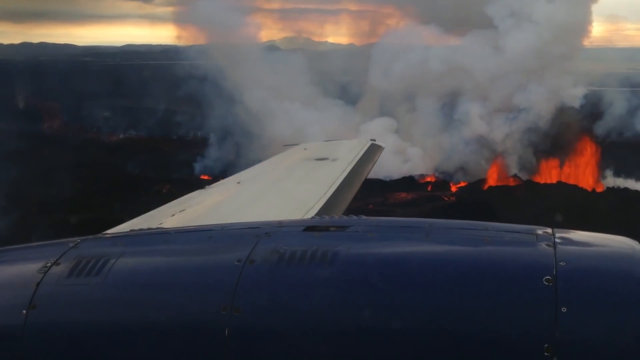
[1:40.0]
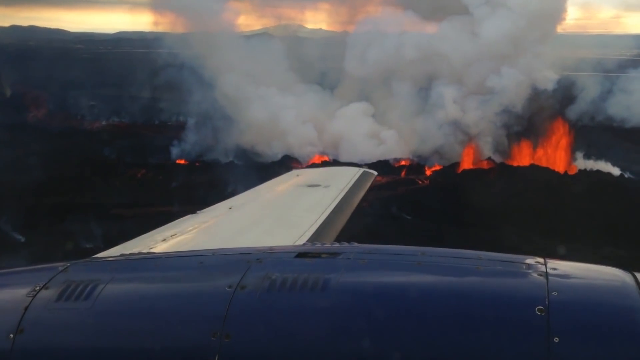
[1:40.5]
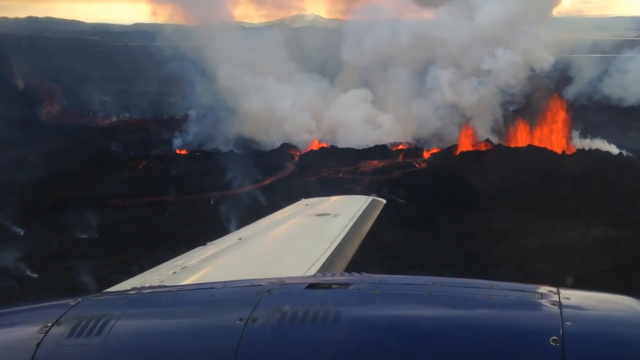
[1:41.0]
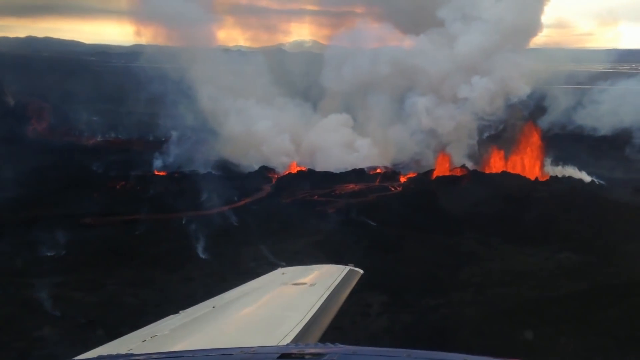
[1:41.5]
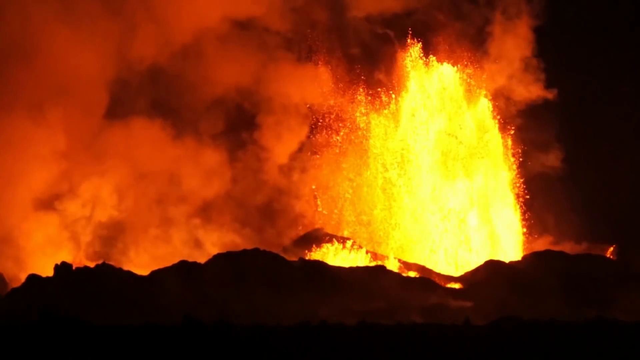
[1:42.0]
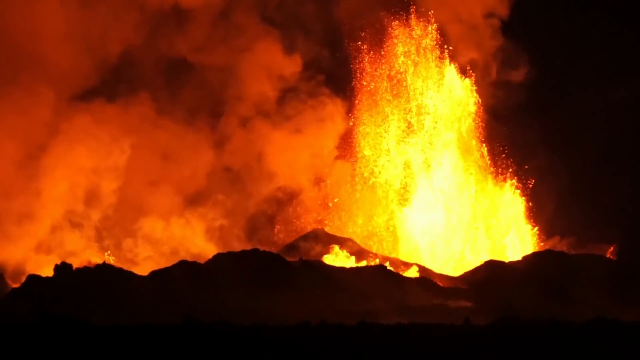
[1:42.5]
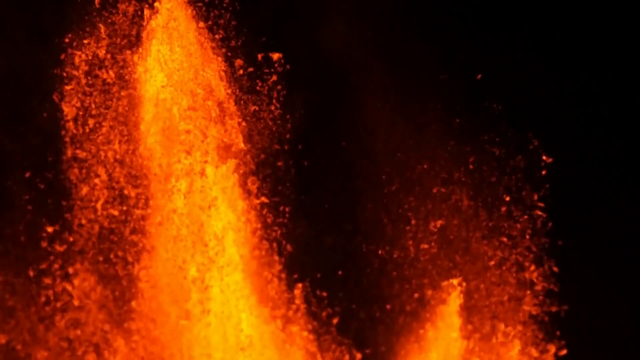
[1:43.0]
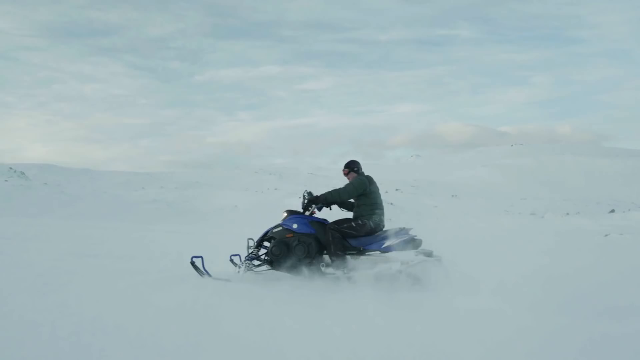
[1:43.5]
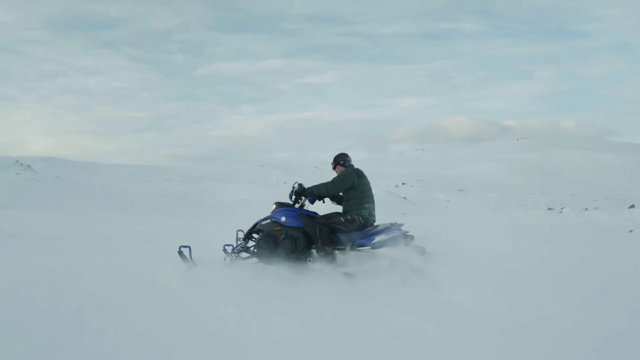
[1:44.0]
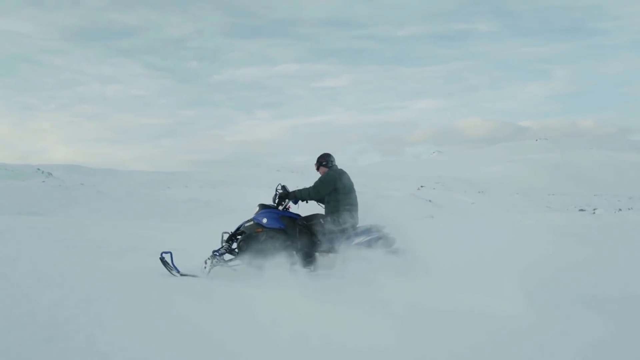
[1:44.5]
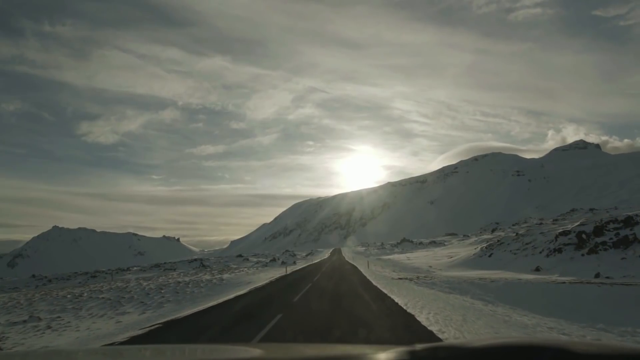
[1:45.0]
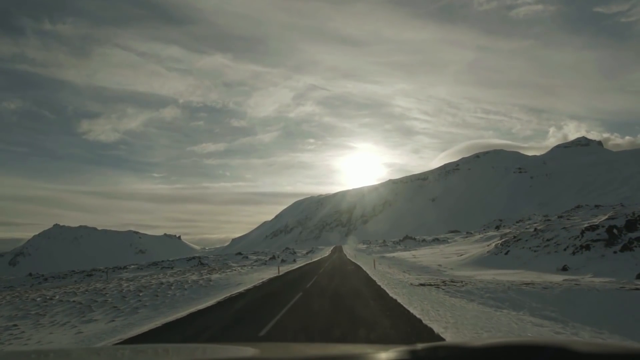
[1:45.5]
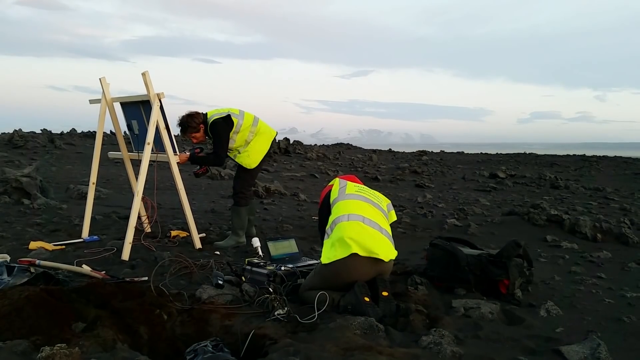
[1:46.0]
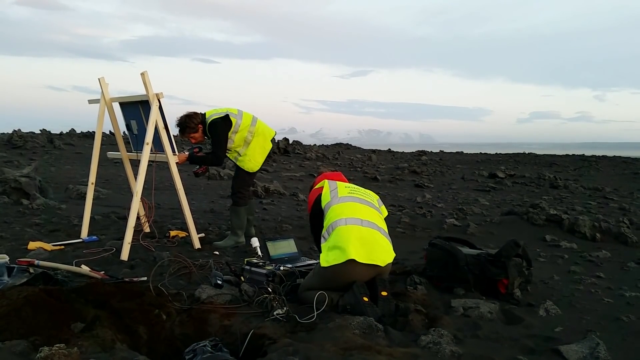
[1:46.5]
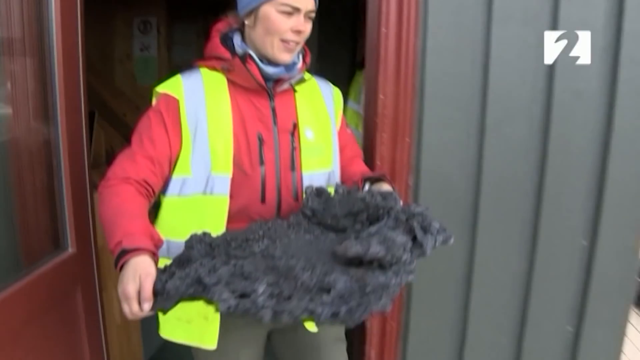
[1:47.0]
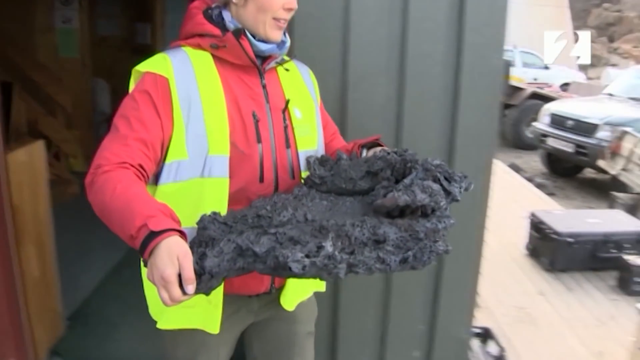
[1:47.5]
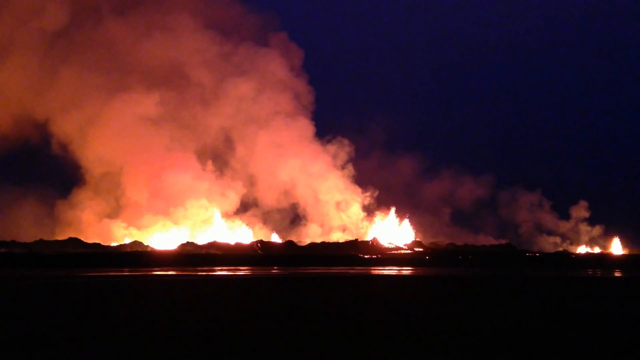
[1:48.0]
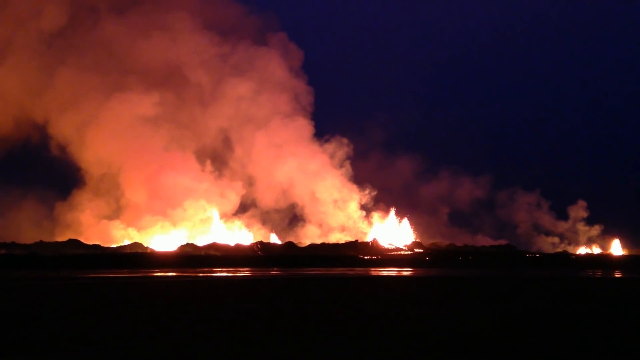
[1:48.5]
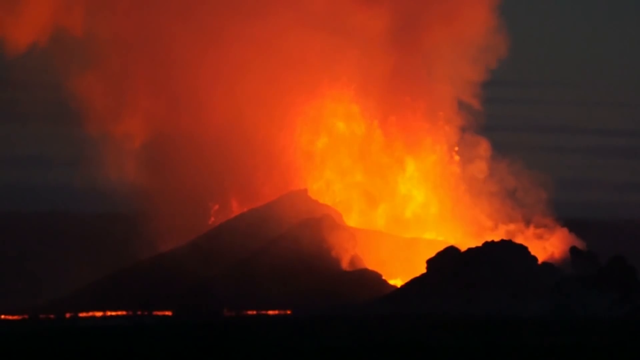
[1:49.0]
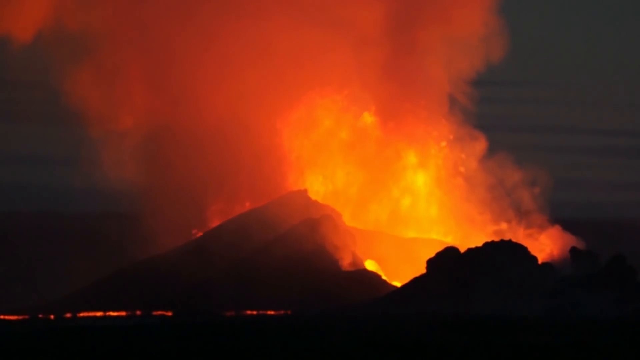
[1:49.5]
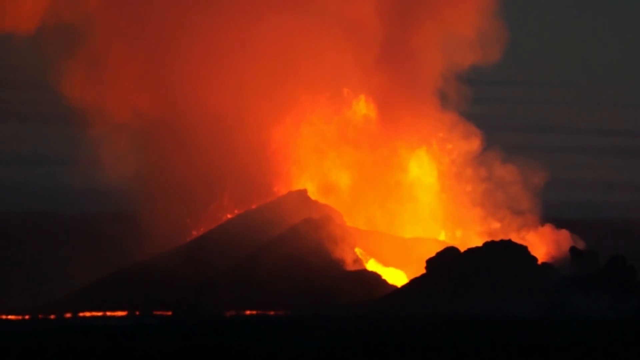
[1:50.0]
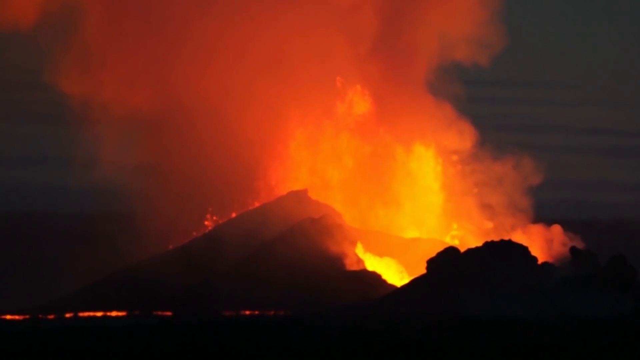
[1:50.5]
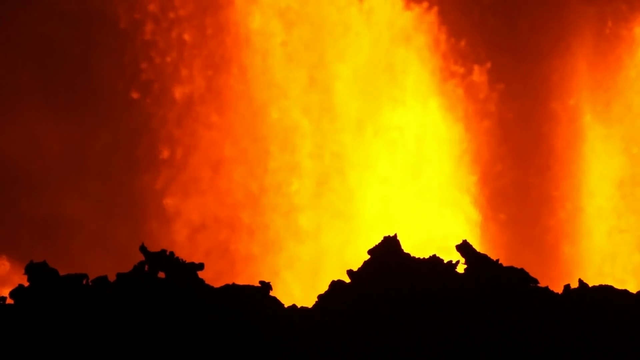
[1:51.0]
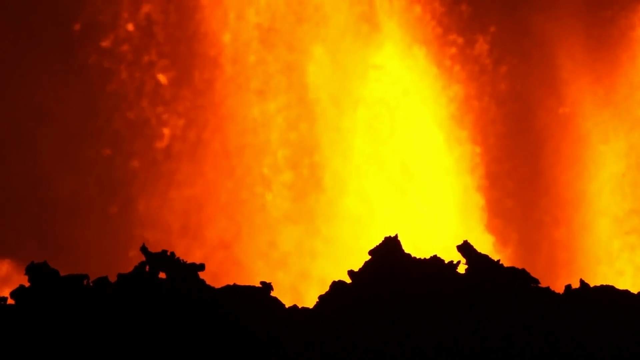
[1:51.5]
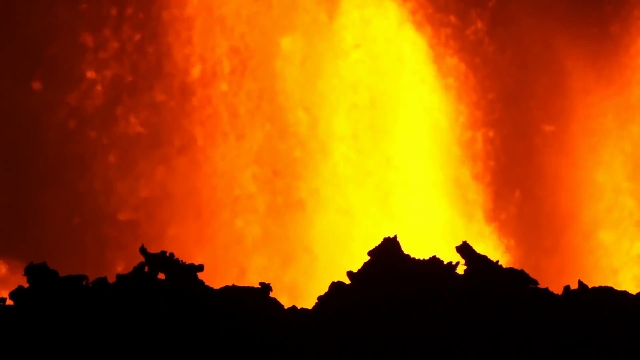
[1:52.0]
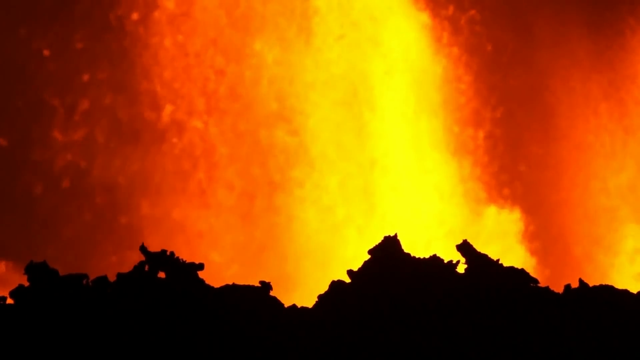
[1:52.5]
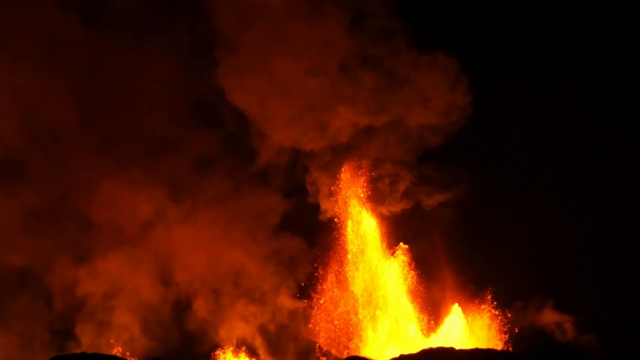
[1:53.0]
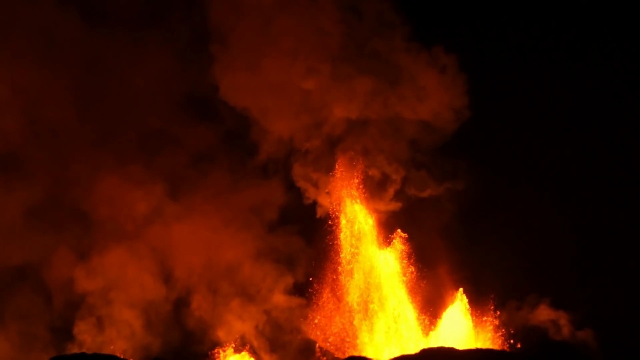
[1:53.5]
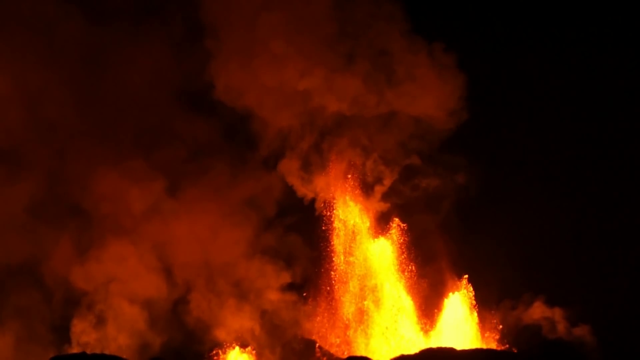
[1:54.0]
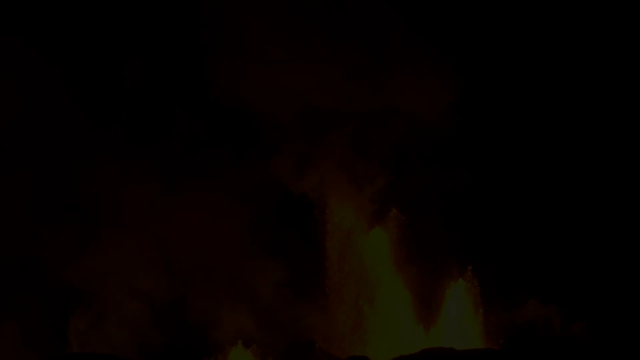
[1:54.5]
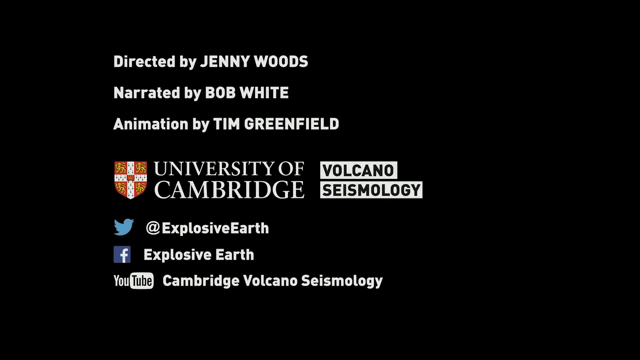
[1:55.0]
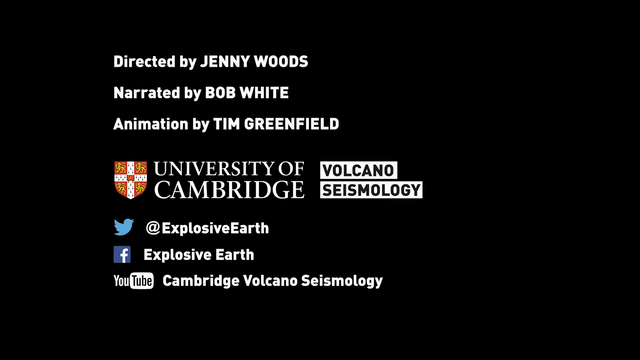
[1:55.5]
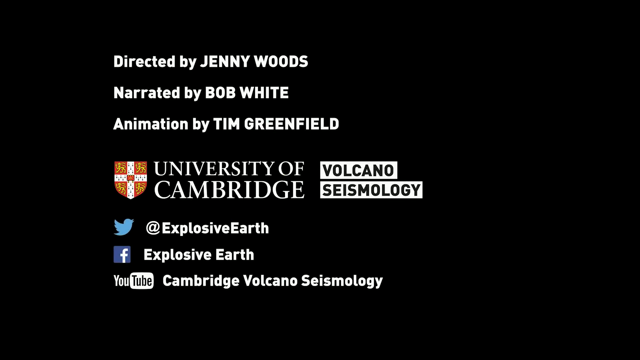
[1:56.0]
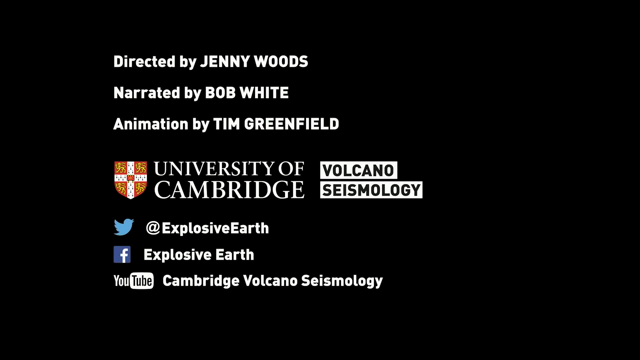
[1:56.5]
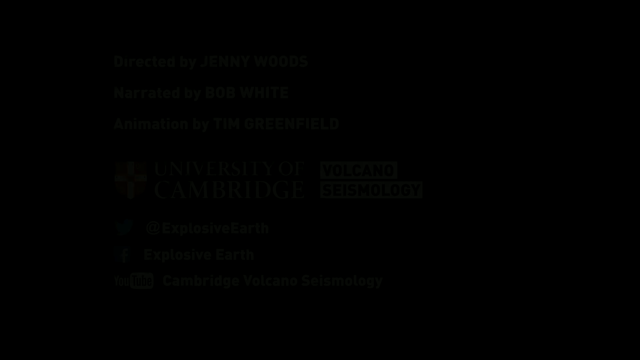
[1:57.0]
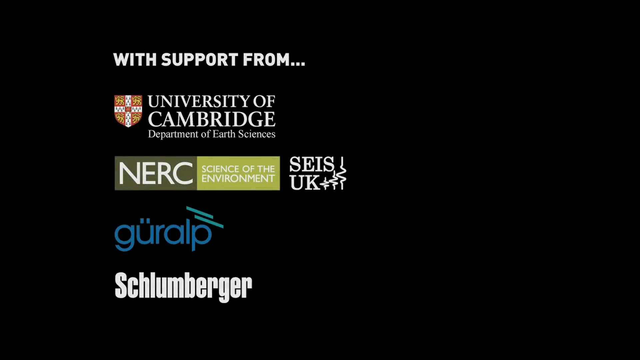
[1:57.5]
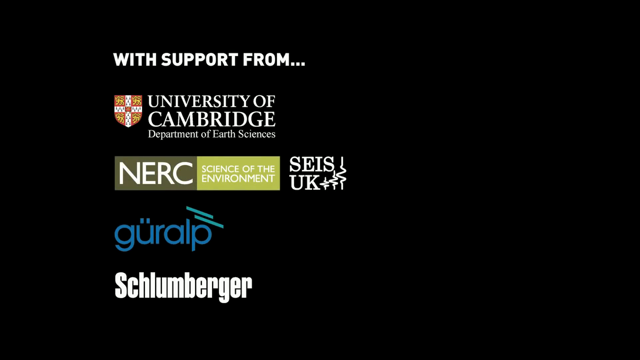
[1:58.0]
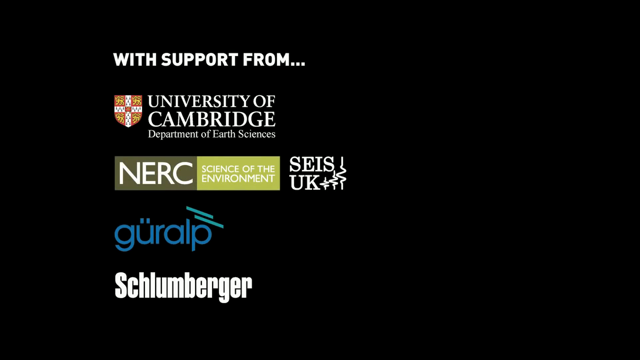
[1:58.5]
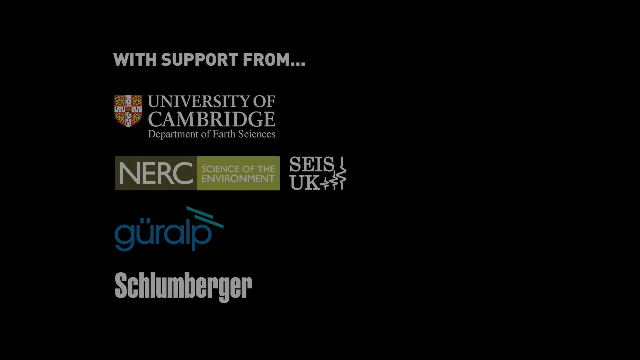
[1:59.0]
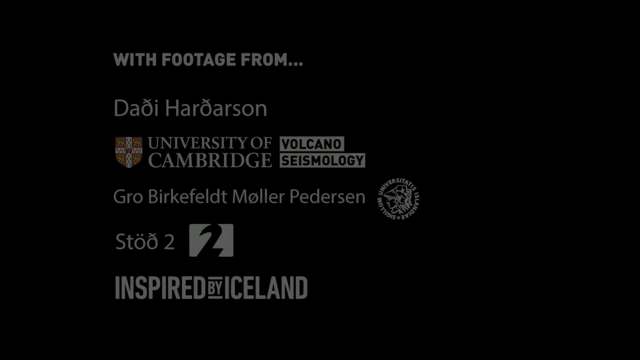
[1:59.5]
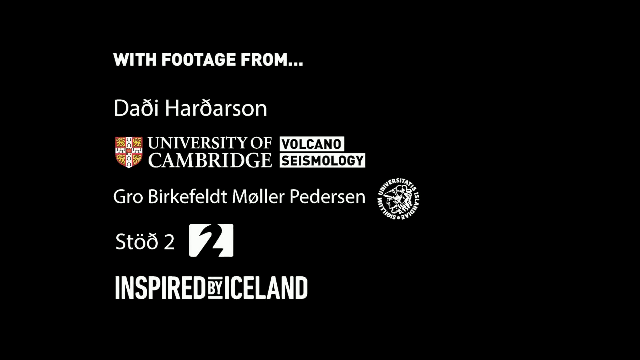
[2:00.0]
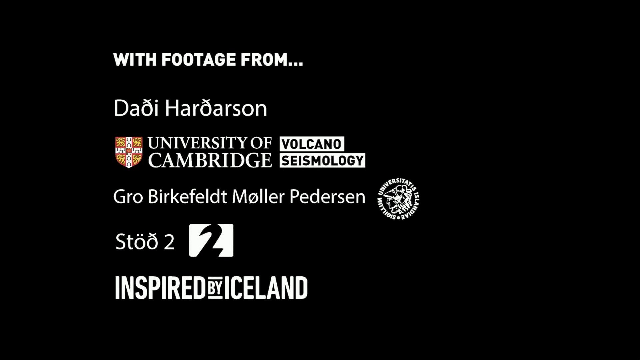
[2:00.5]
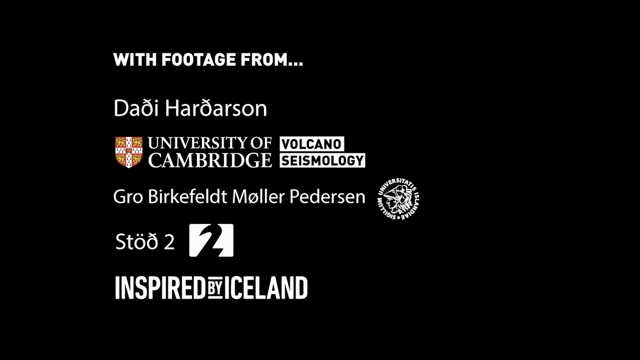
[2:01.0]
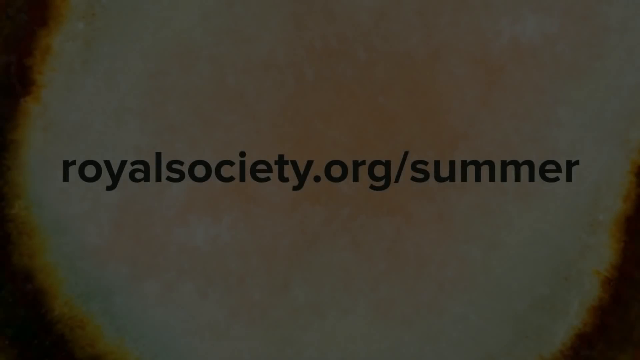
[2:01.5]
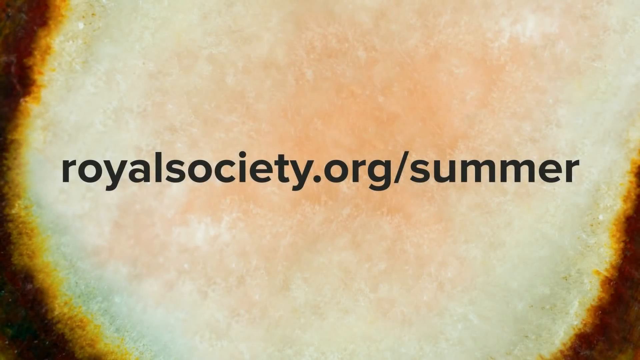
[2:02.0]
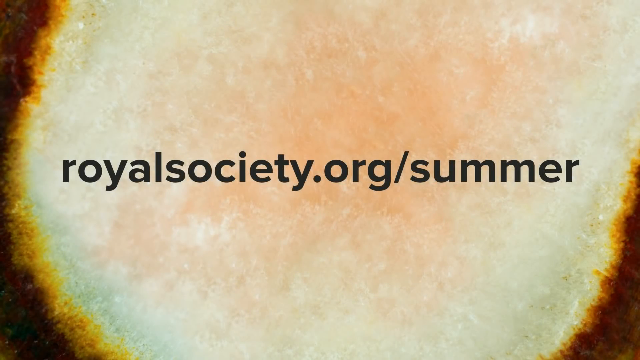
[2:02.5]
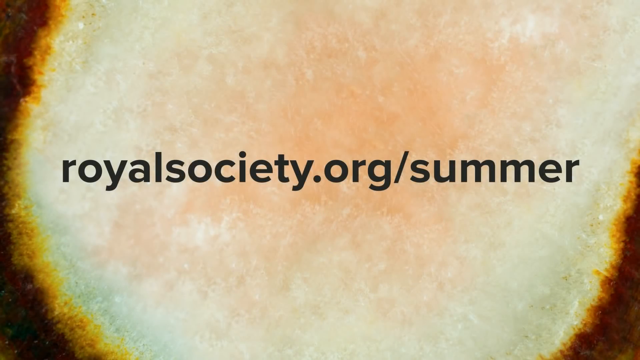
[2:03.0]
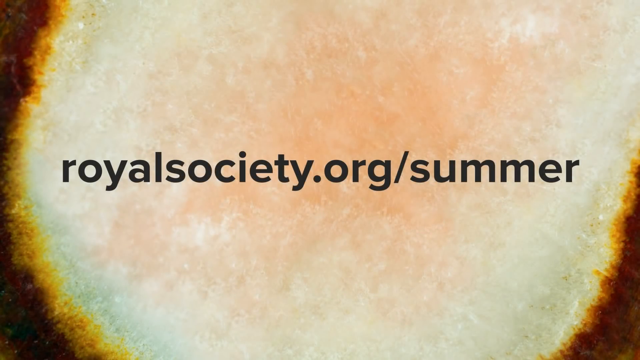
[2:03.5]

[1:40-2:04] From a plane, the lava is seen far away, exploding from the ground with white smoke coming out of the ground. Lava from the mountainside blows up at the top. A person rides a ski-doo on the snow. The road and all the snow around the mountaintop are shown. Two people in yellow vests are working on the ground. A woman walks out of a building carrying a hardened piece of lava, and many trucks are parked in front of this structure. The camera goes back to a night scene where the lava is seen from far away, exploding up with smoke all around. The camera is on the mountaintop again, showing lava and orange smoke. More images of the exploding lava follow, and the camera zooms out to show the lava shooting up into the sky. The image fades to "University of Cambridge Seismology" and the credits "Directed by Jenny Woods, narrated by Bob White, animation by Tim Greenfield." Below are the social media channels. It finishes with "royalsociety.org/summer".